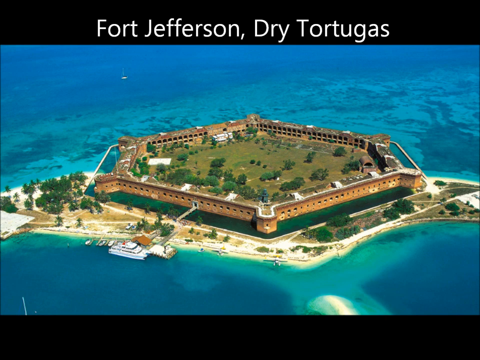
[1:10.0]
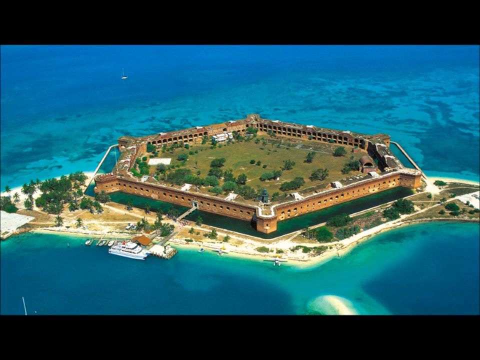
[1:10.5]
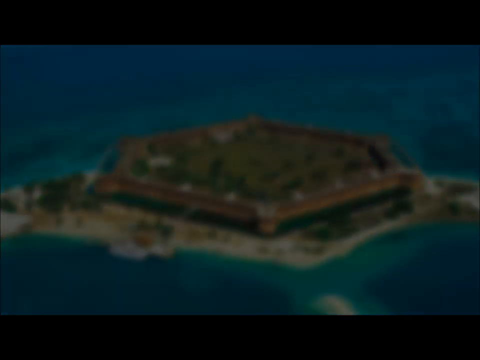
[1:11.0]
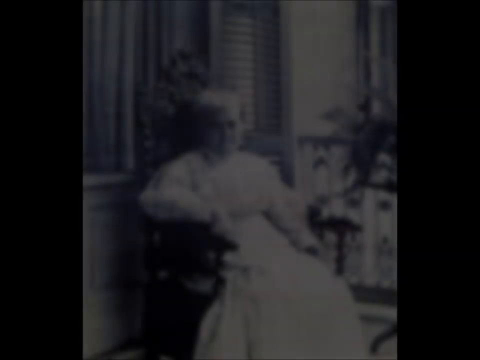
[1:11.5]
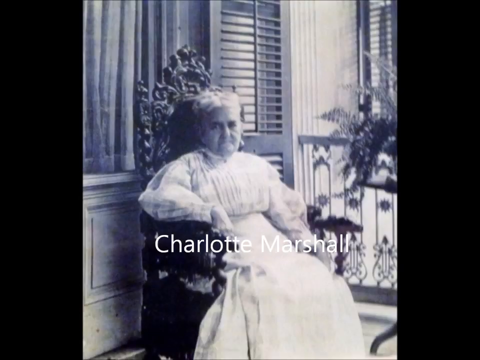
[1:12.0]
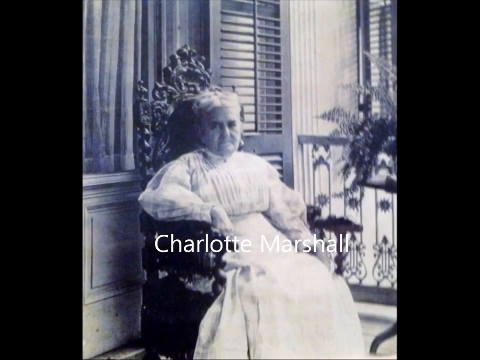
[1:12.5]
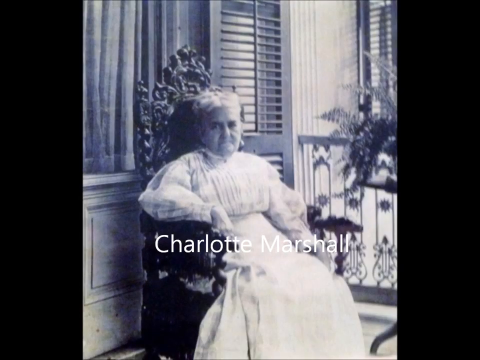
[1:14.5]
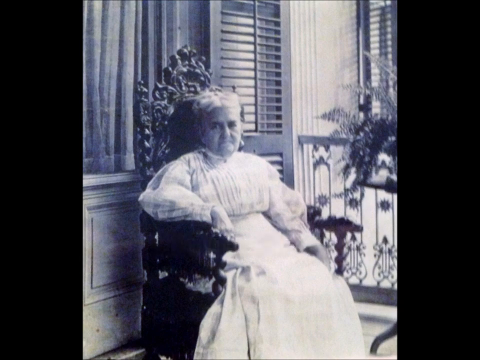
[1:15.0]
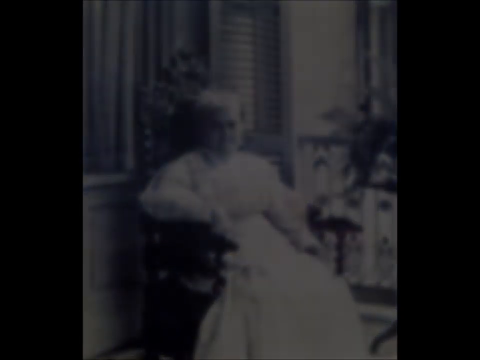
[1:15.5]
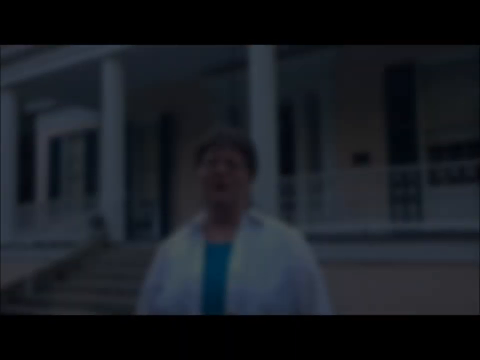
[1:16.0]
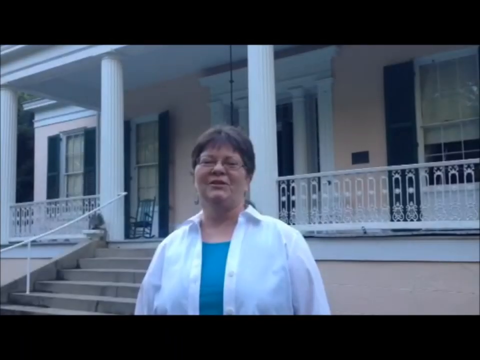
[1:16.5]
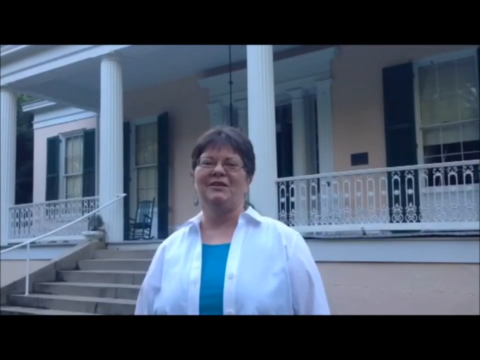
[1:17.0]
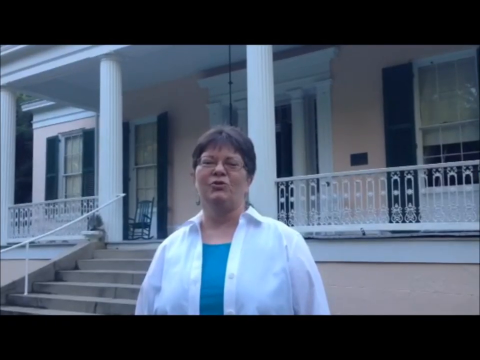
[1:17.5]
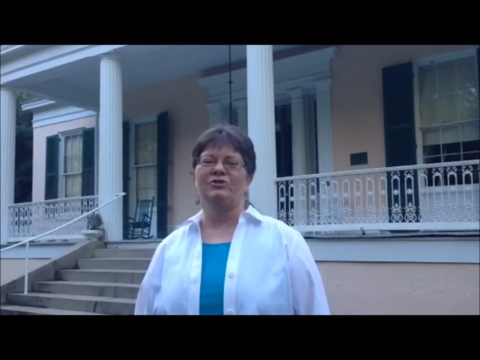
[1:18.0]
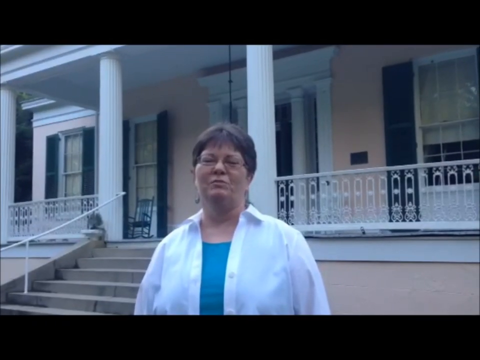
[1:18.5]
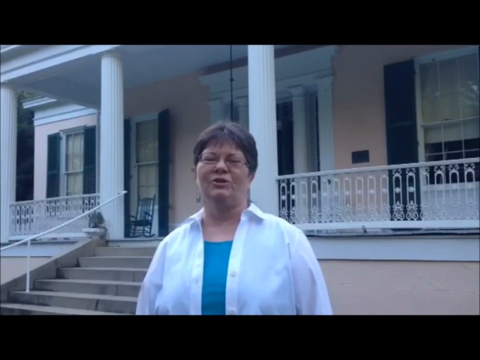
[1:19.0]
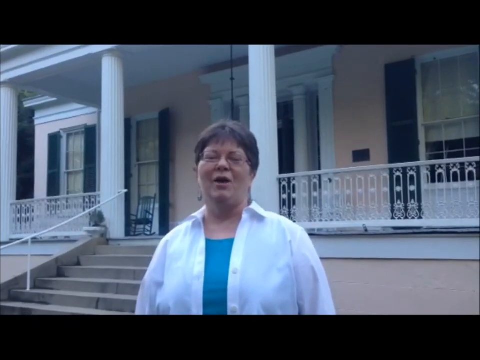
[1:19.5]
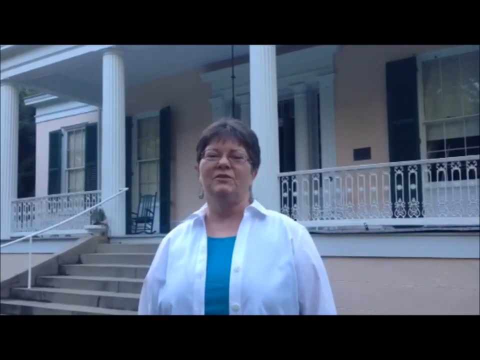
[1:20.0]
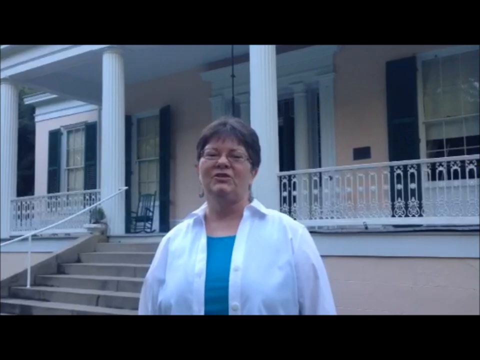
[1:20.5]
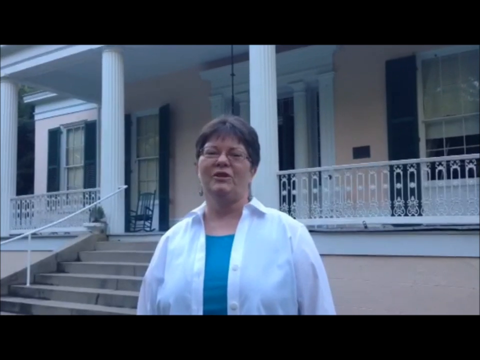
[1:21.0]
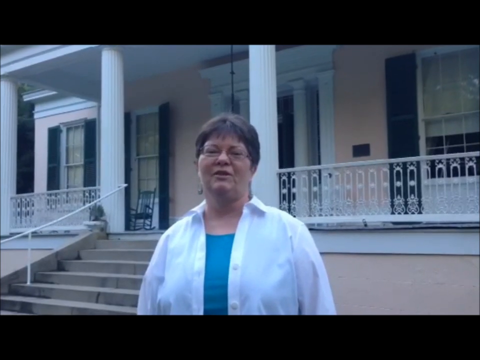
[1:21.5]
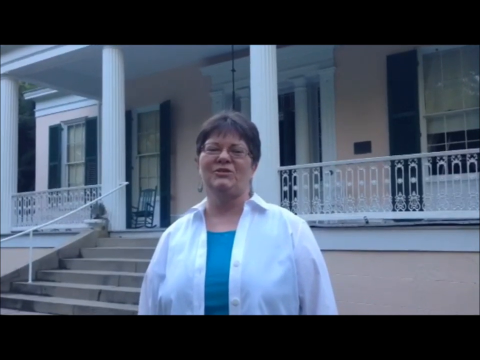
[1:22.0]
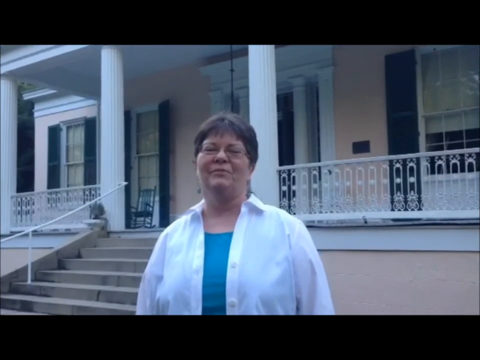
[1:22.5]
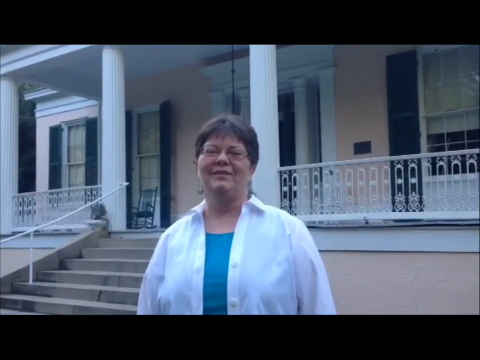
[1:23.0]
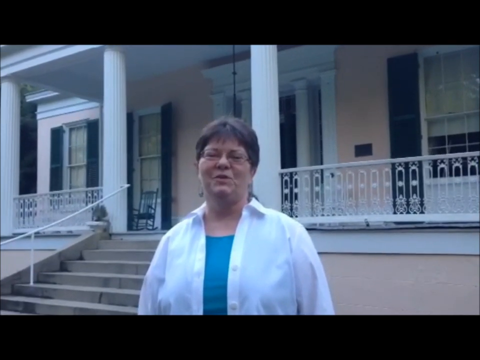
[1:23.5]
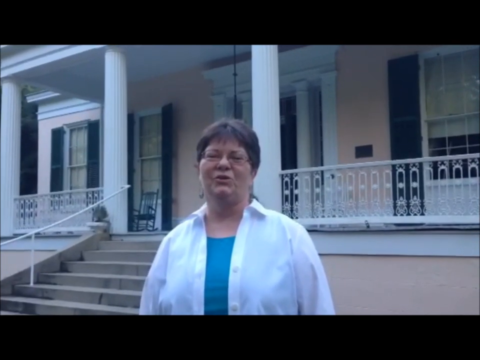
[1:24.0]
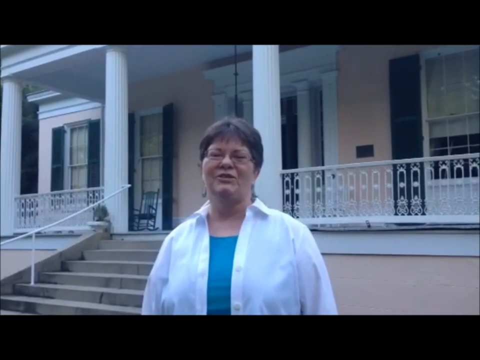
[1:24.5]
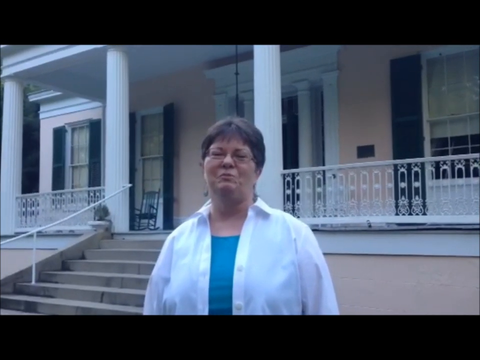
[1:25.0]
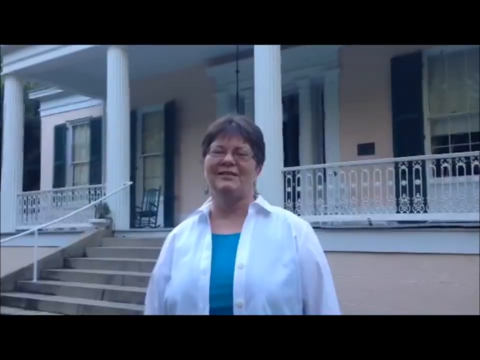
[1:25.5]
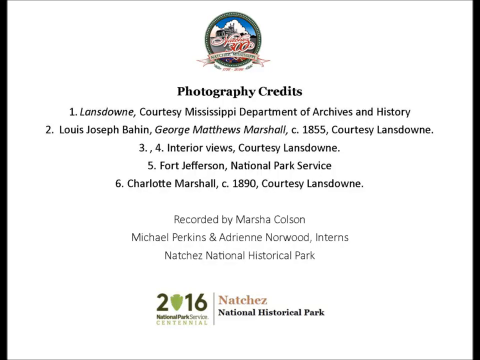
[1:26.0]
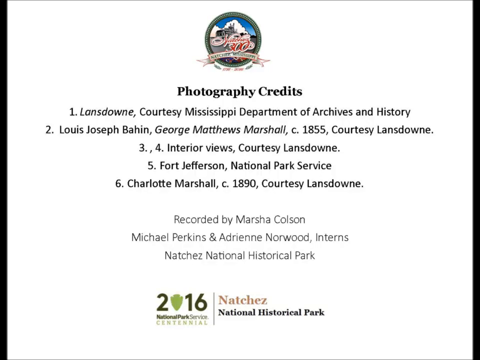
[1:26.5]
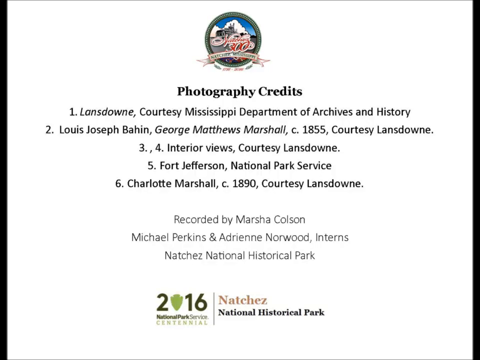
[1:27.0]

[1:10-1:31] The fort stays in view, and then the scene switches to a black and white photo that looks like it is maybe from the early 1900s. It shows an older woman who looks like she is on a sun porch or in a sunroom, sitting in what almost looks like a chair a king would sit in, made of elaborately grained wood. White text over her reads "Charlotte Marsh." The woman looks to be in her 70s or 80s, with her hair up, wearing a white flowy dress that goes from her wrists down. She looks like she is sitting in front of a window and a shutter, and a delicately engraved wrought iron fence with three rows is visible. The scene then switches to a woman who is probably in her 40s or 50s, apparently in more present times, standing in front of the house from the beginning. She wears a blue shirt with a white polo-type long-sleeve shirt over it, has glasses and very short hair, and is talking right in front of the building's staircase.